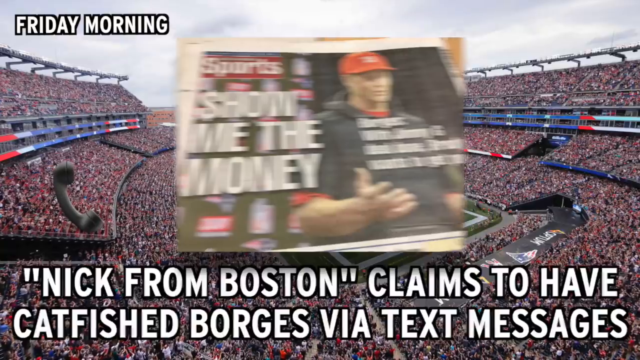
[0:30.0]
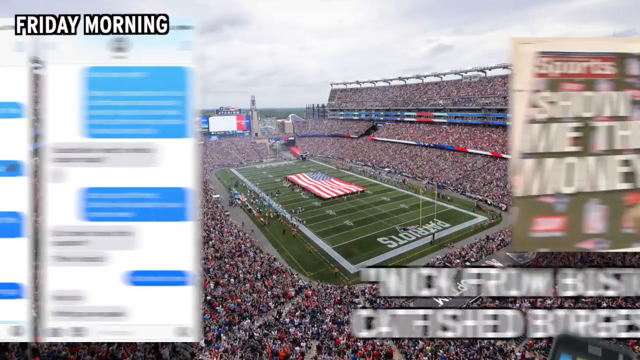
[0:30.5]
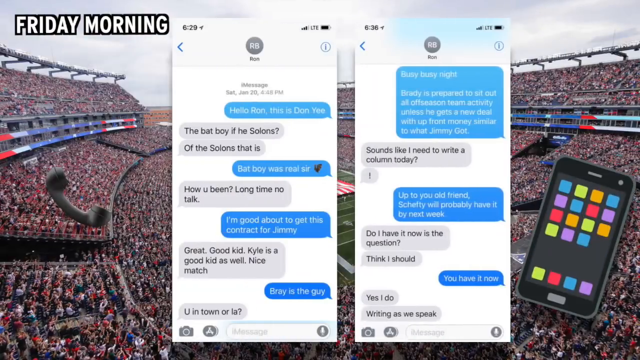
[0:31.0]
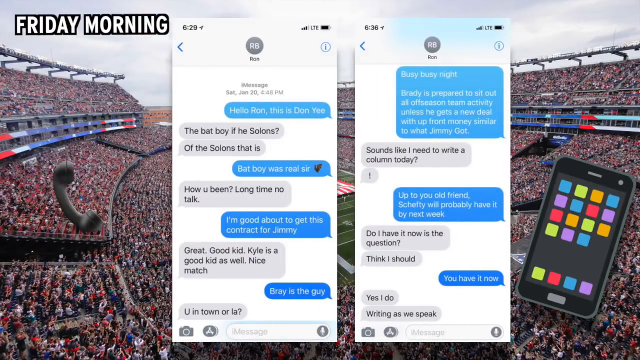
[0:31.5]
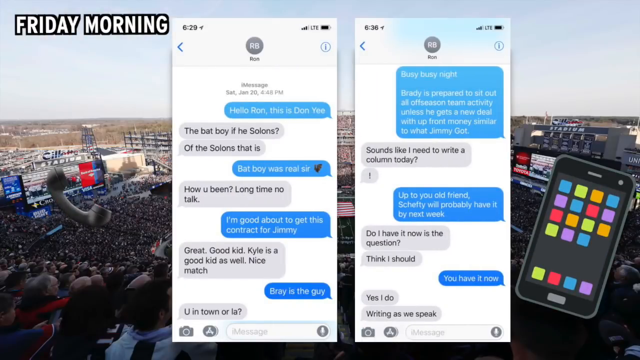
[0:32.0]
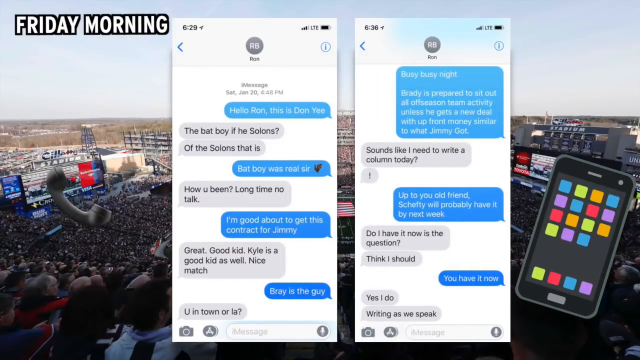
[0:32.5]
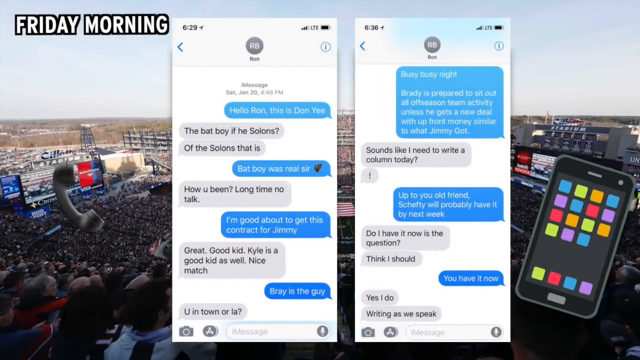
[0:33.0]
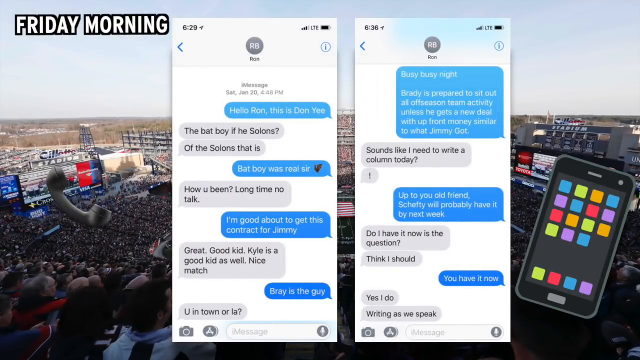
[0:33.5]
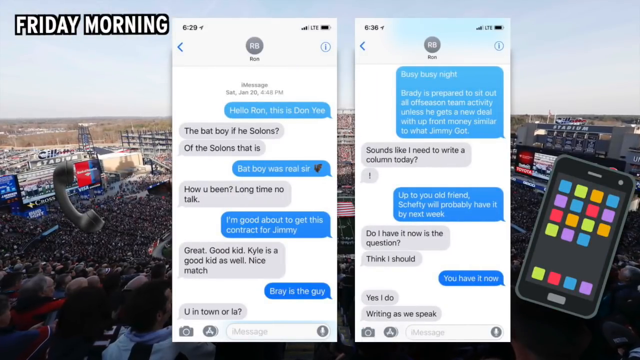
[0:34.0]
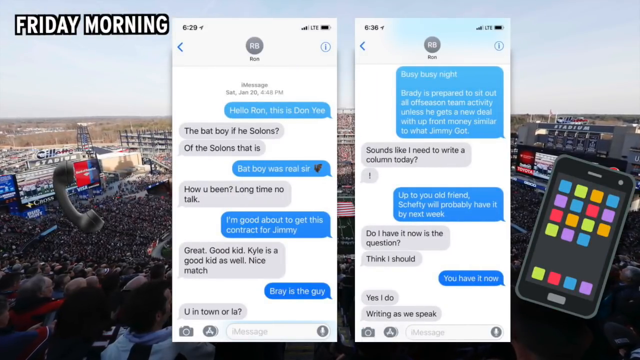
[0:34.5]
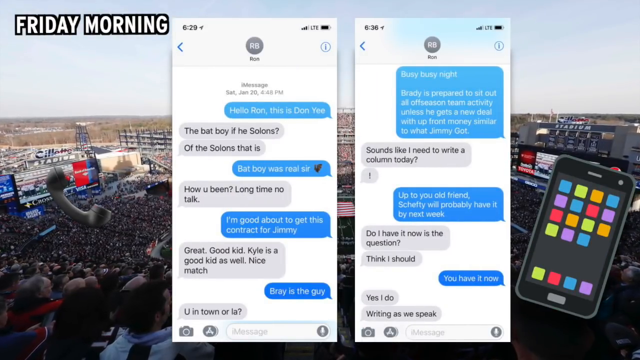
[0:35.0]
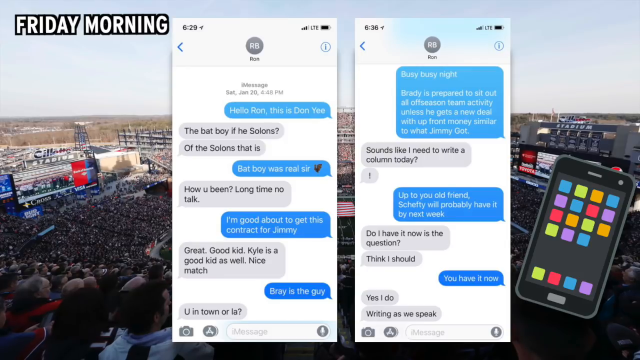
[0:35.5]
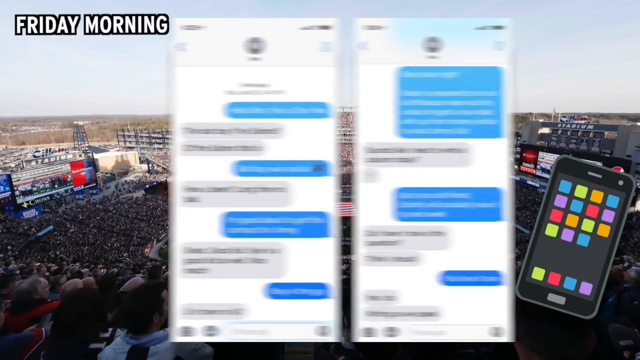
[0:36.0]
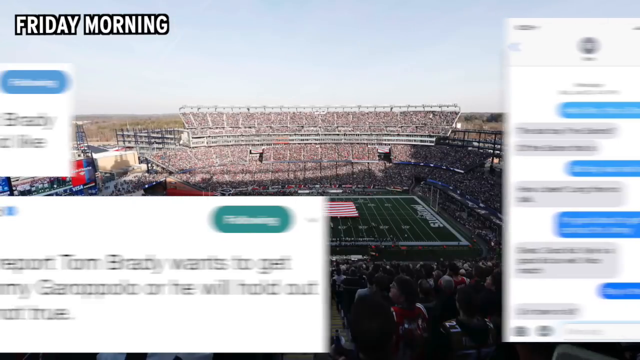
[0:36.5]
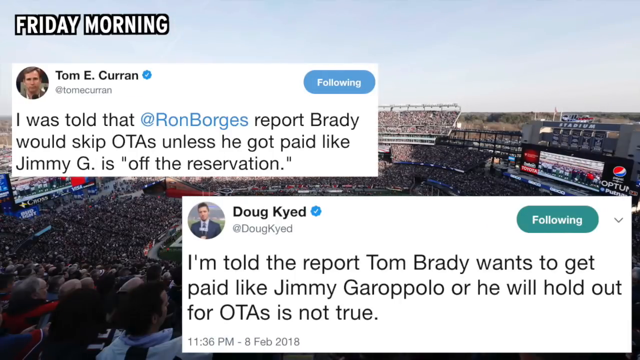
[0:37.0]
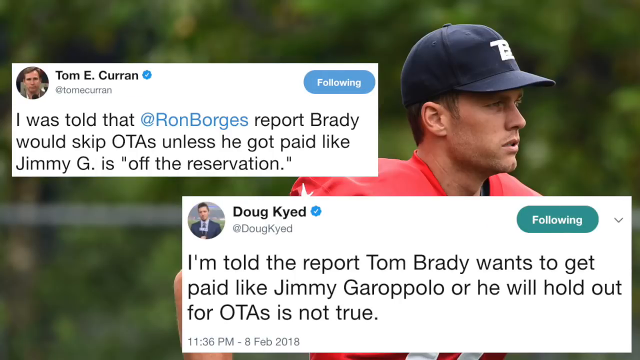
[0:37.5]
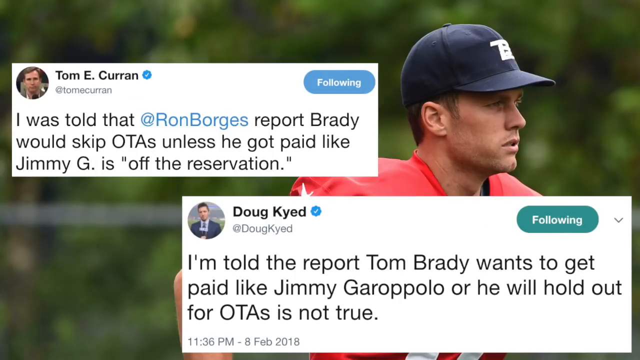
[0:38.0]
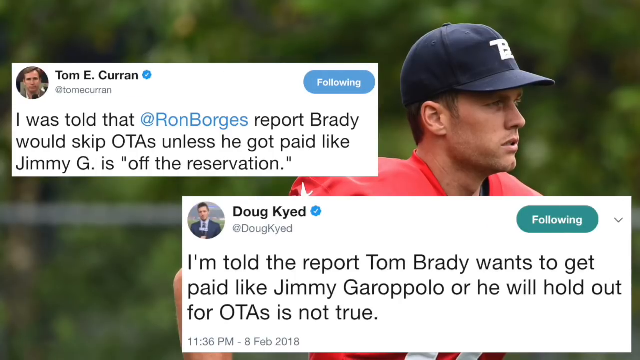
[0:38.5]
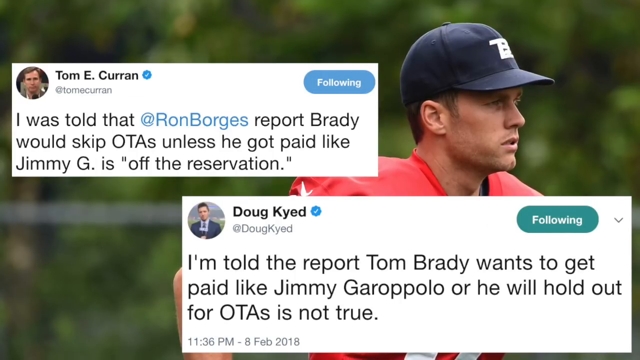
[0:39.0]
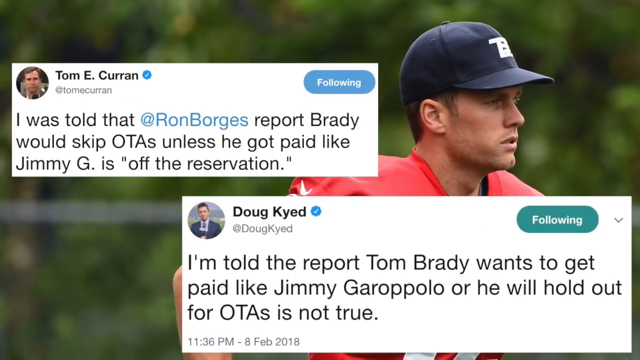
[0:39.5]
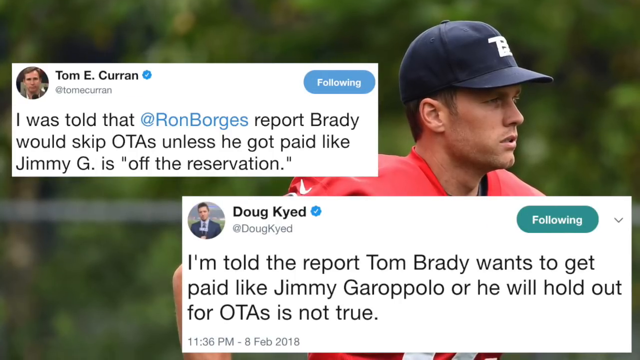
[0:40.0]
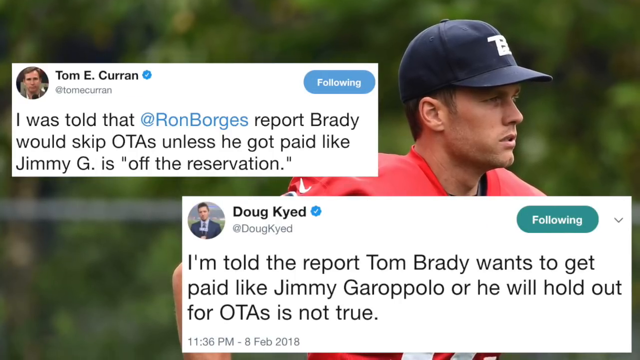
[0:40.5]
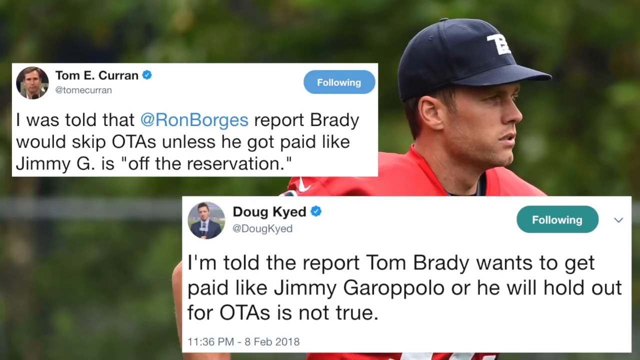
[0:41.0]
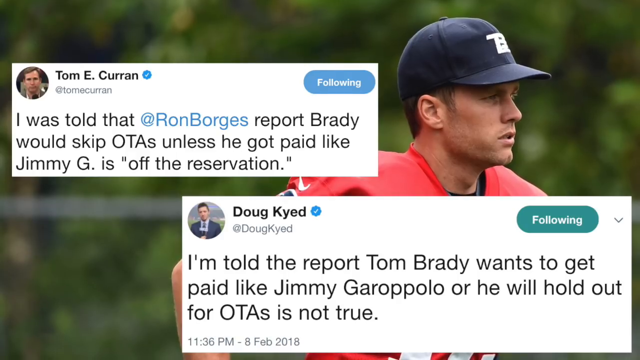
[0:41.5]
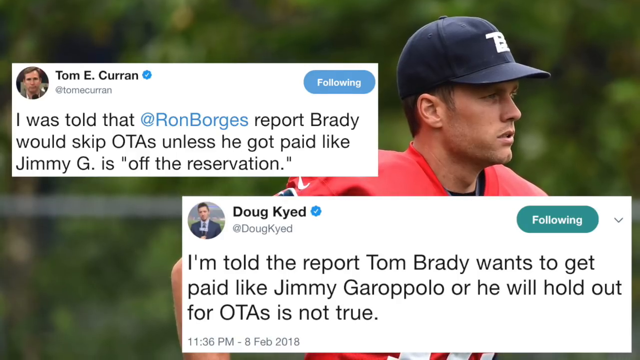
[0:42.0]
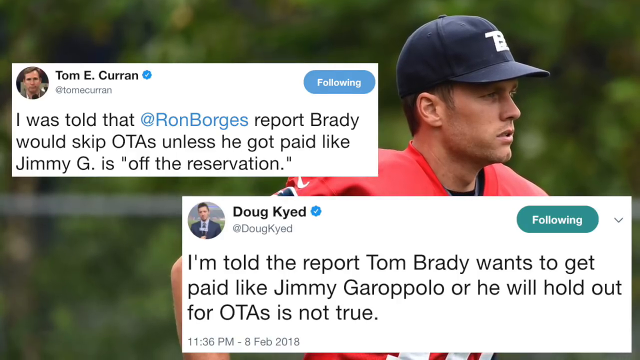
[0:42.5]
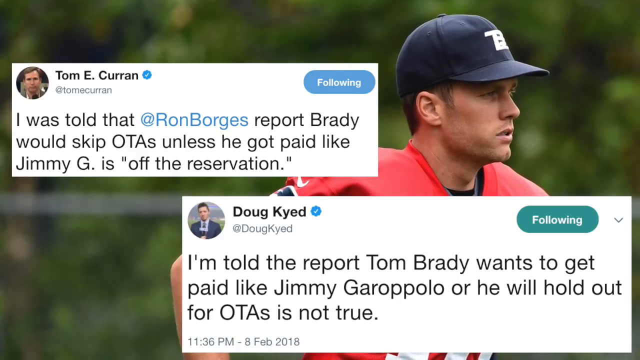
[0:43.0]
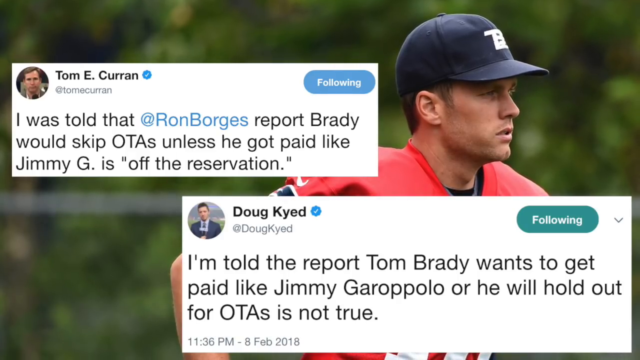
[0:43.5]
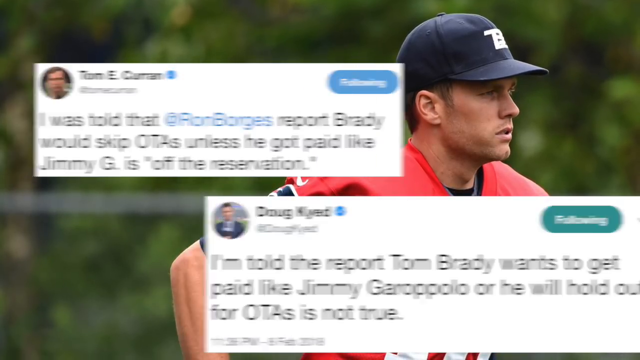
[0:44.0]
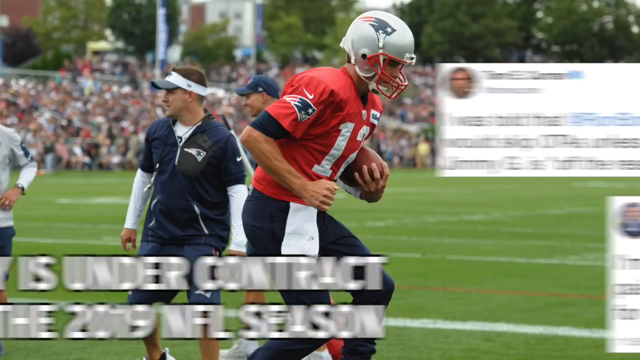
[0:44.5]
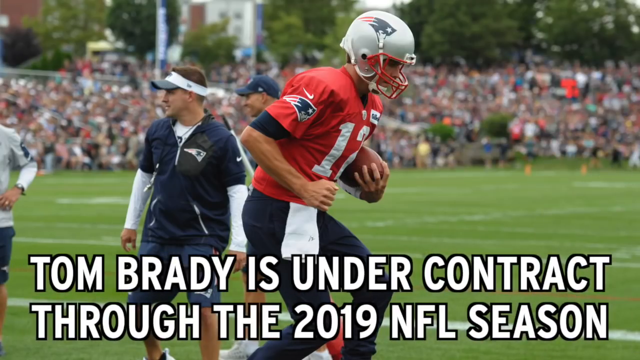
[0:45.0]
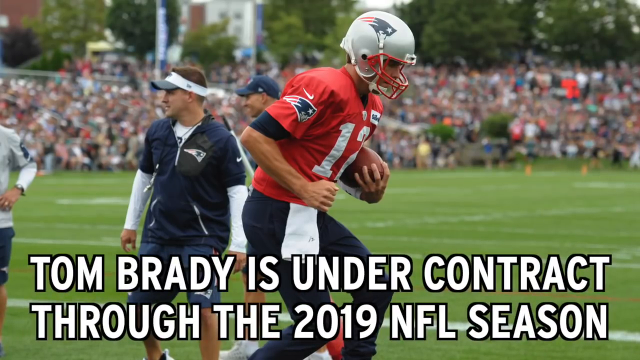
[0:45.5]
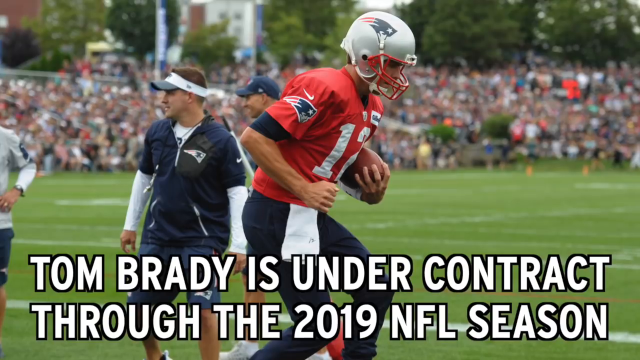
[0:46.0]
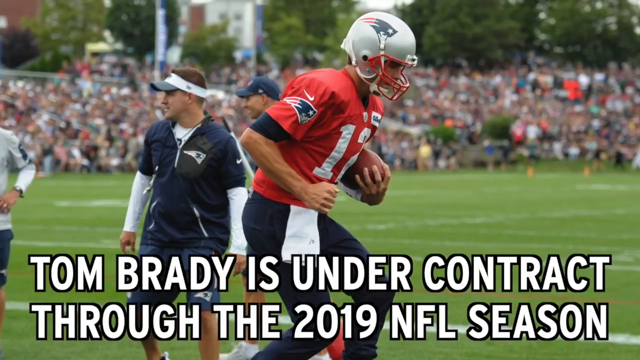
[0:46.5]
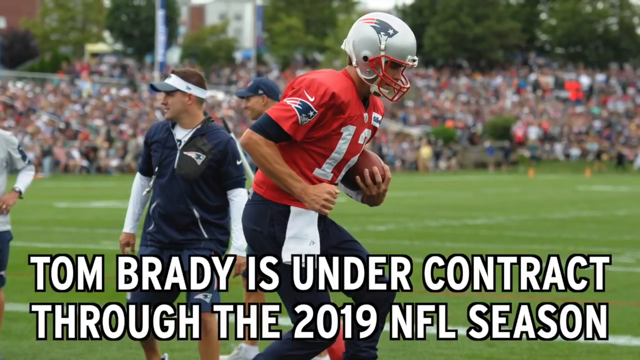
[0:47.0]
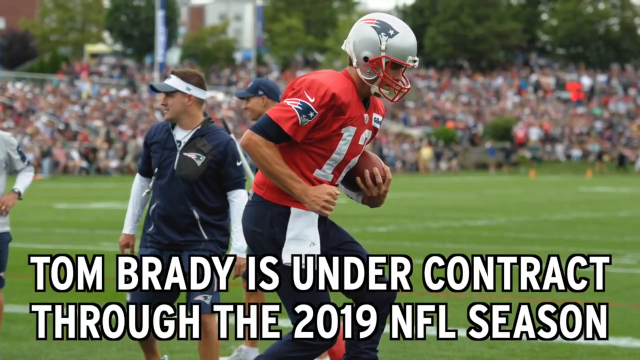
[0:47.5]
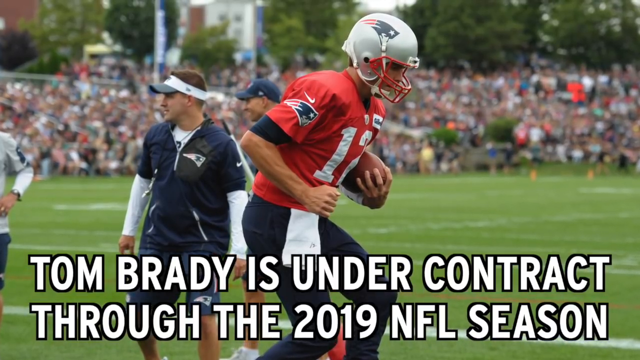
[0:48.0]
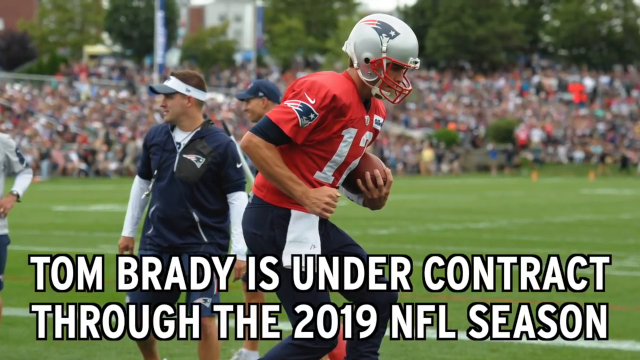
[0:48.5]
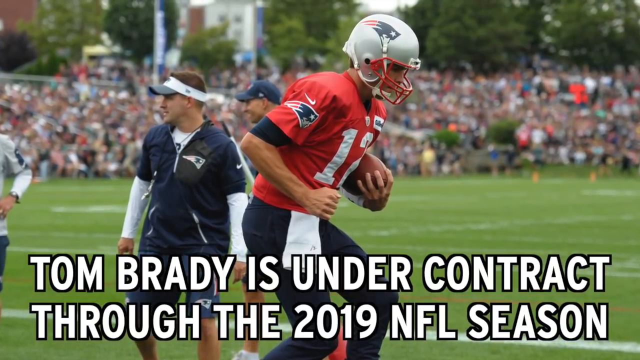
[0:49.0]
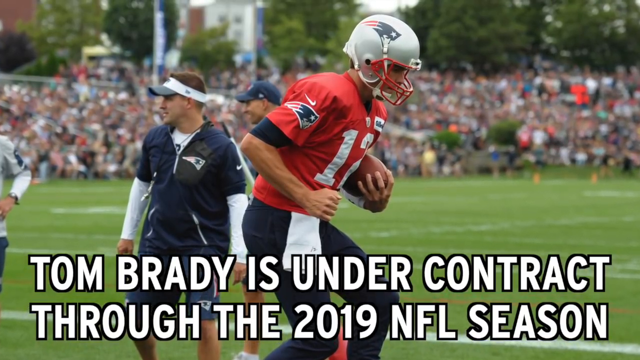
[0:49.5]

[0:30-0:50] The screen transitions with a wipe from left to right, and text messages are shown on screen with the contact name "Ron". A smartphone icon appears in the bottom right of the screen. The background changes to a different angle of a stadium and continues to zoom in. Another left-to-right wipe follows, and two tweets are shown on screen, one from "Tom E. Curran" and the other from "Doug Kyed". The background changes to a white male wearing a red jersey and a blue baseball cap on the right-hand side of the screen, with a blurred forest behind him. After another left-to-right wipe, a football player stands in the center of the screen wearing a Patriots uniform and the number 12 jersey, with three other males behind him on a football field. The text at the bottom of the screen changes to read "Tom Brady is under contract 2019 NFL season". The camera zooms in.